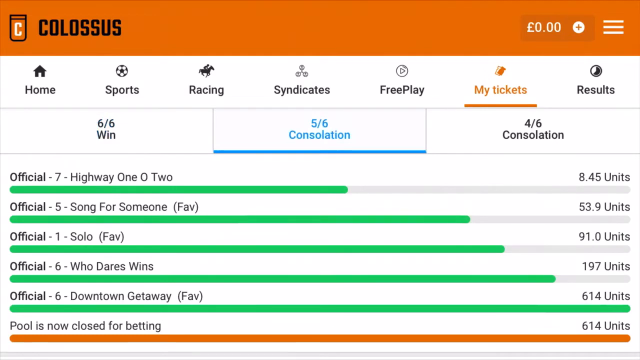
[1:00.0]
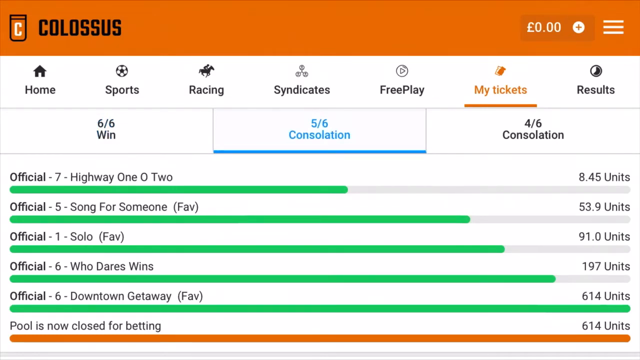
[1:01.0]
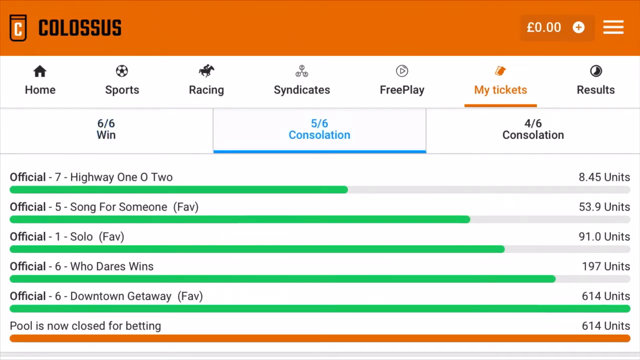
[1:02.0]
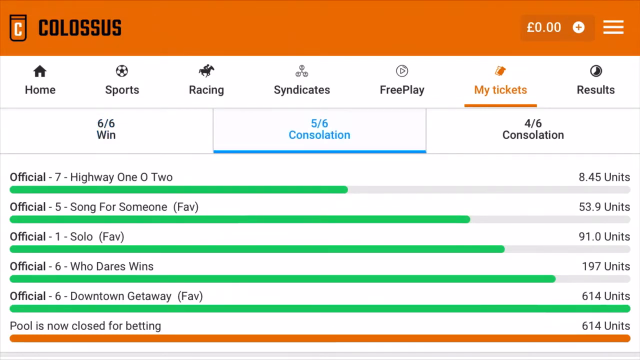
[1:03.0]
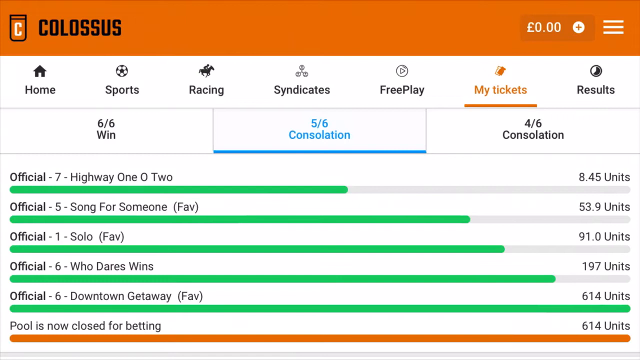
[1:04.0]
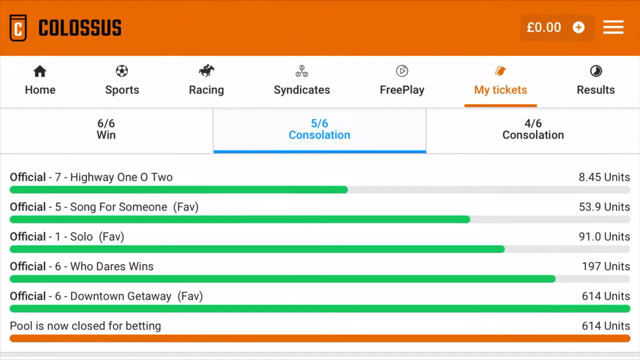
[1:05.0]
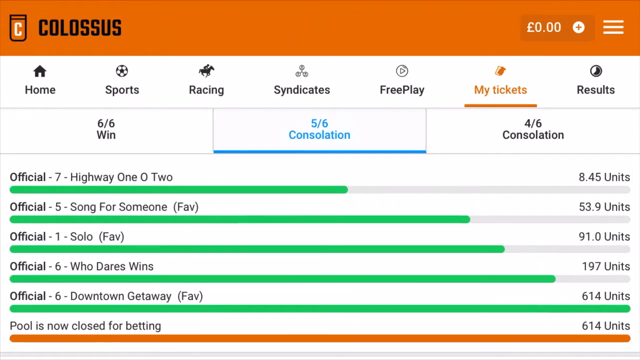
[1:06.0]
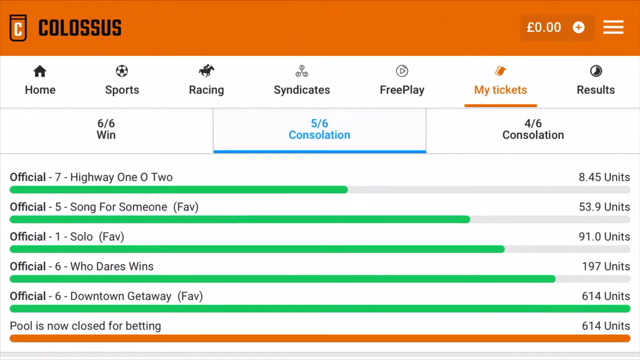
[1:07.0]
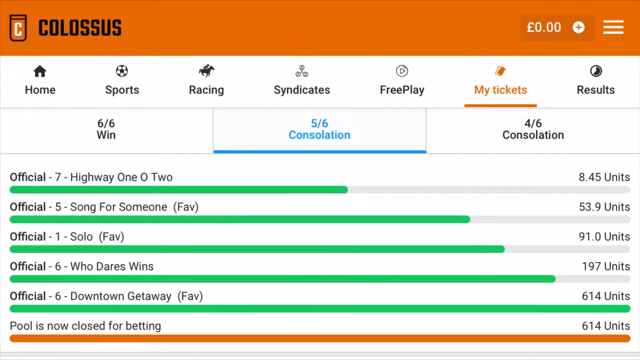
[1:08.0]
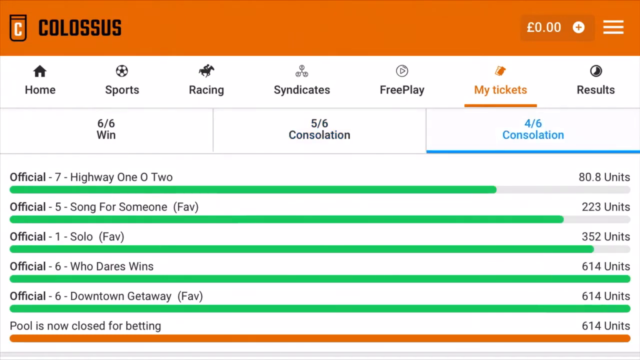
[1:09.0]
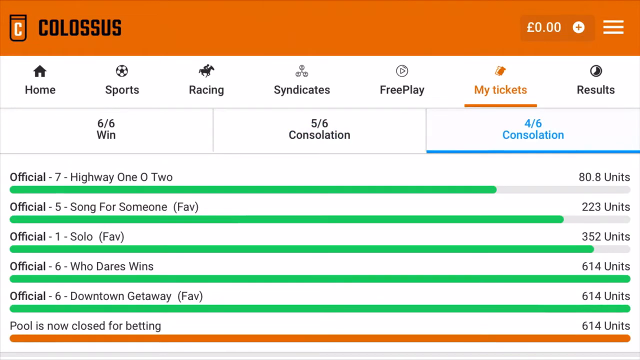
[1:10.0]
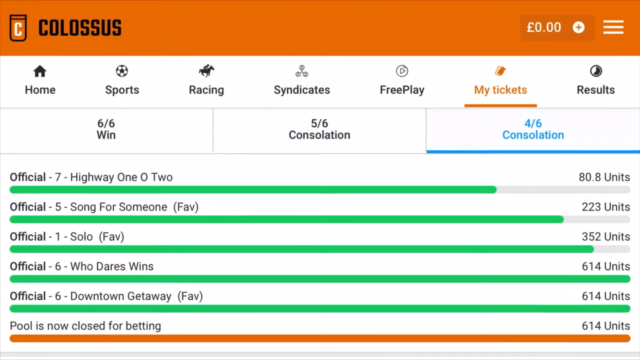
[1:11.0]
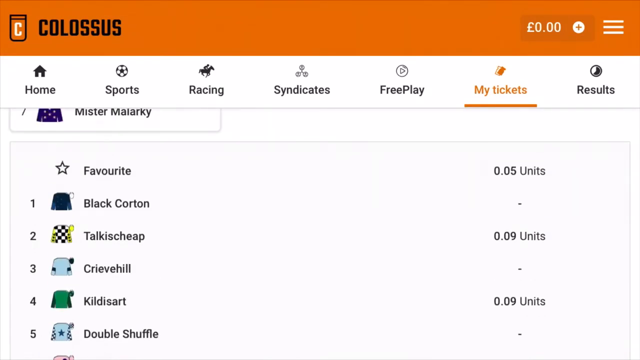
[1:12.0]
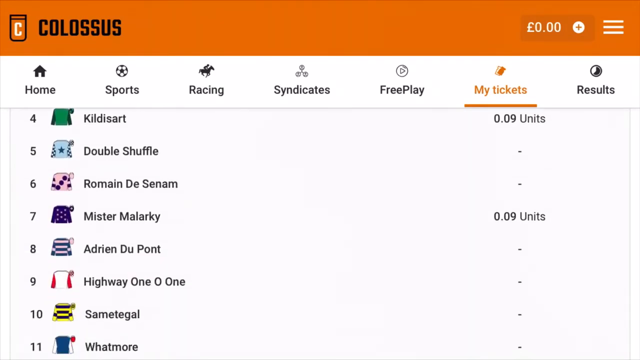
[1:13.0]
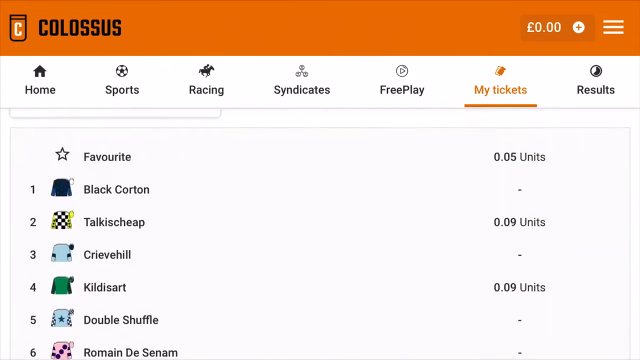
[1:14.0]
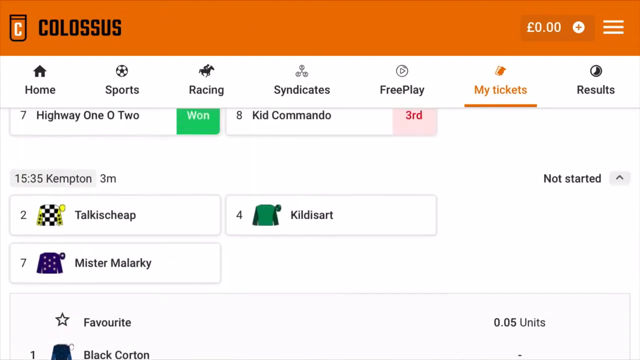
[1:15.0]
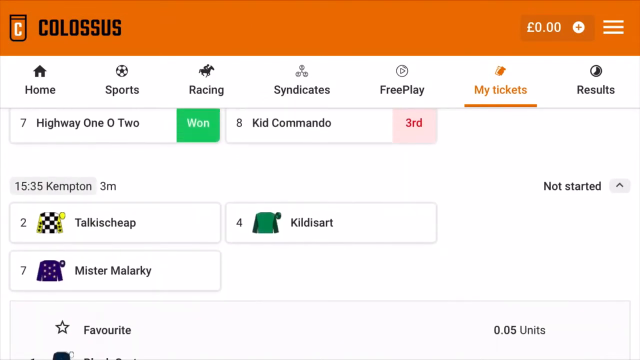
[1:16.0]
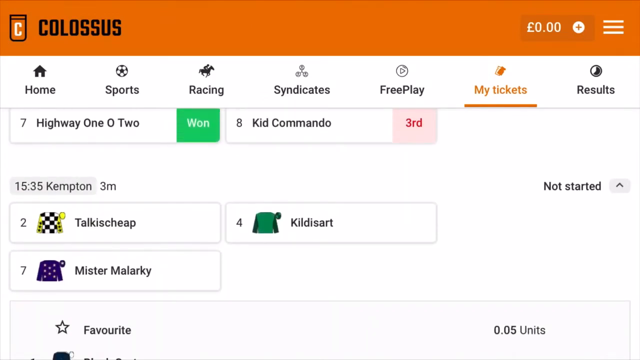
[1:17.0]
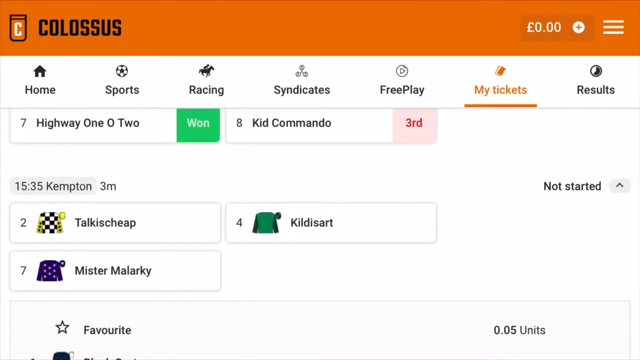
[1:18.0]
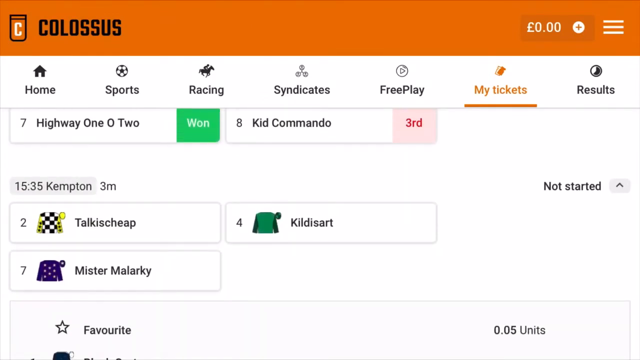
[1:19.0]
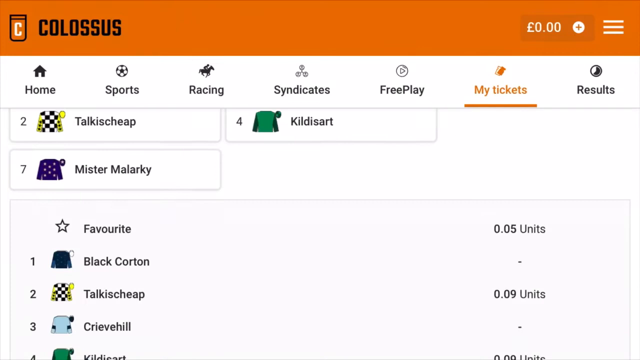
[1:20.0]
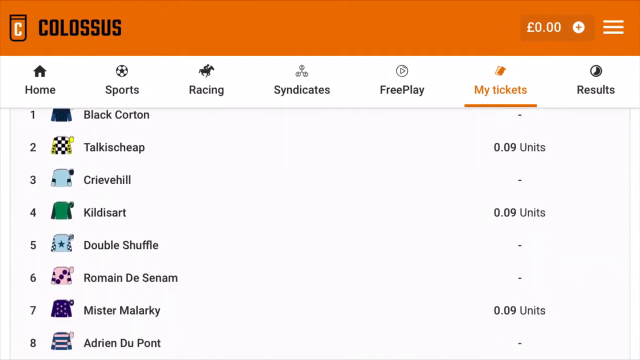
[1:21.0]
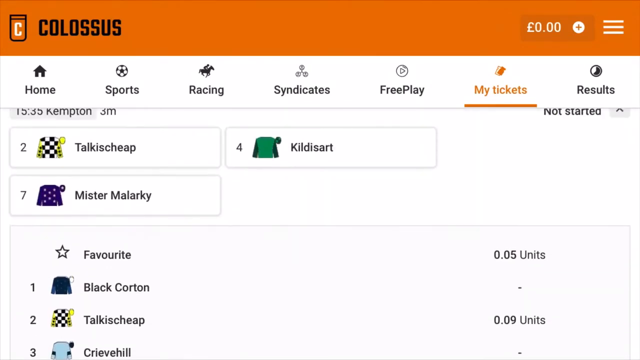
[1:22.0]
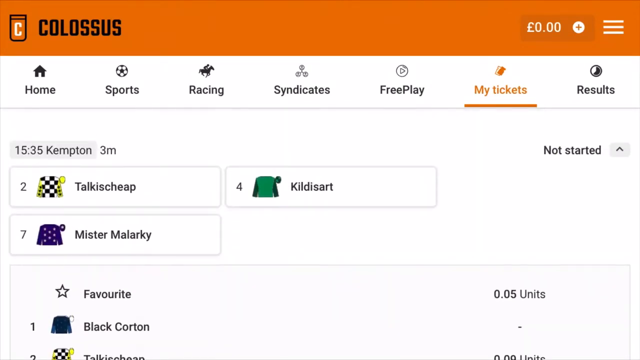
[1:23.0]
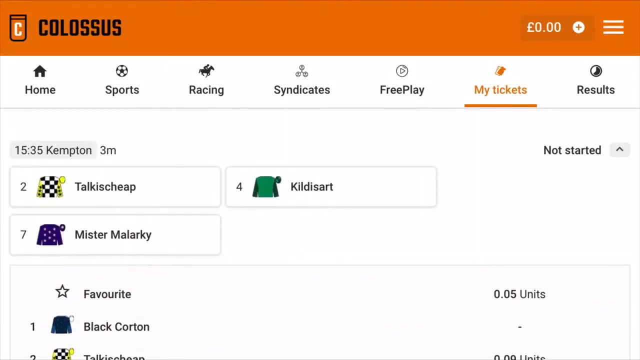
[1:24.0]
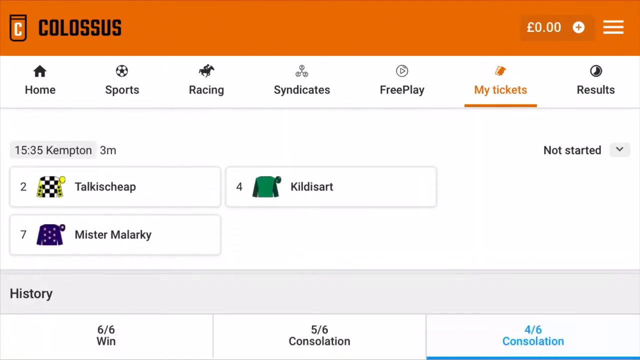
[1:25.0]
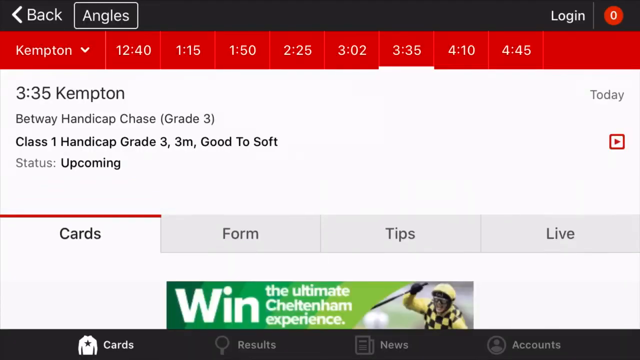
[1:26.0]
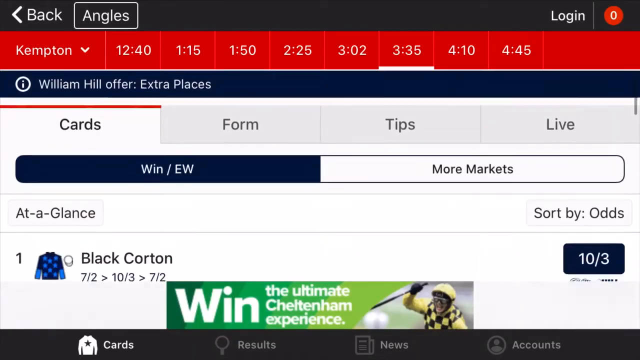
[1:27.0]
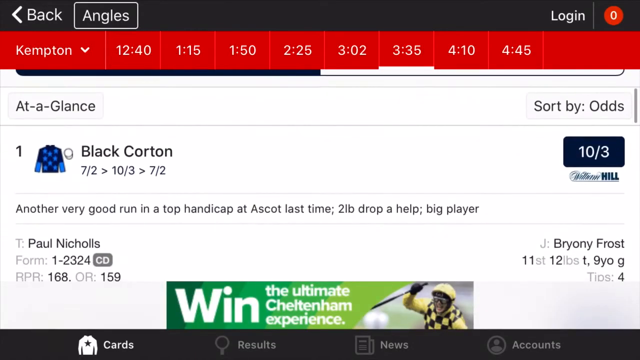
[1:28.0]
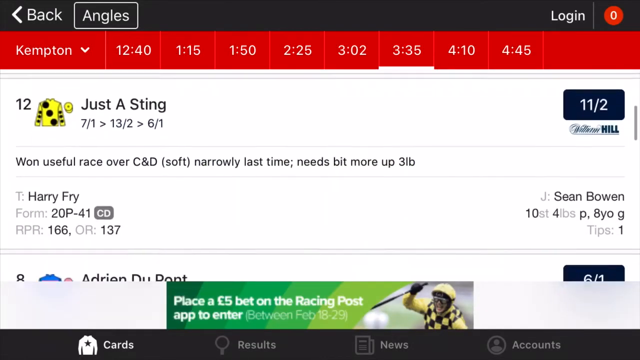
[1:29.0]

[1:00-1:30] A Colossus page has an orange band at the top, with the name in the upper left-hand corner and the categories home, sports, racing, syndicates, free play, my tickets and results. My tickets is underlined and highlighted. The cursor moves across "6-6 wins", "5-6 consolation" and "4-6 consolation", and one is now highlighted in blue. The consolations are shown, including "highway 102-1", with a green section in there. Someone scrolls under Kempton, where it says "3-35 Kempton", and the page scrolls very fast, showing what the prizes would be. Units are listed at the far right side of the screen: "official 7", "official 5", "official 1", "6" and "6". Each has a green bar going from left to right; only the downtown getaway bar reaches the right end, and all the other bars do not quite reach it.